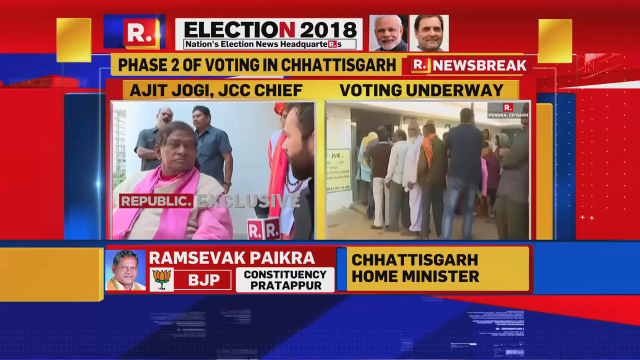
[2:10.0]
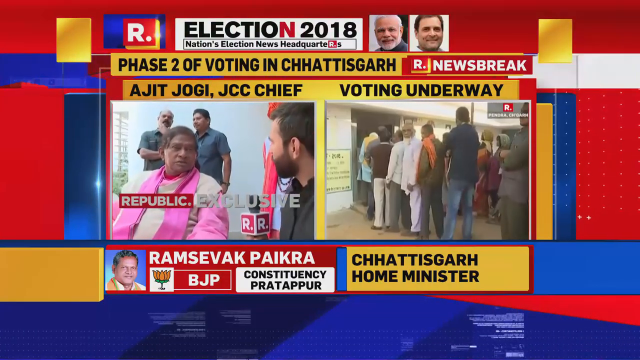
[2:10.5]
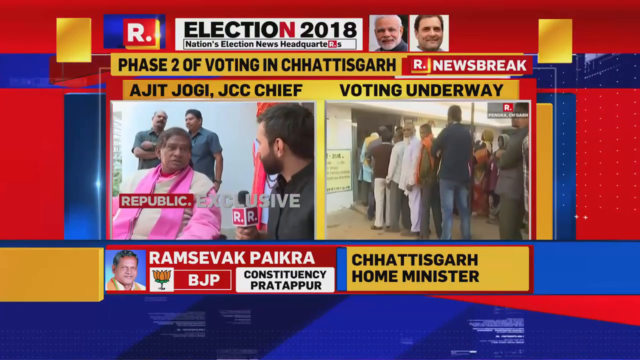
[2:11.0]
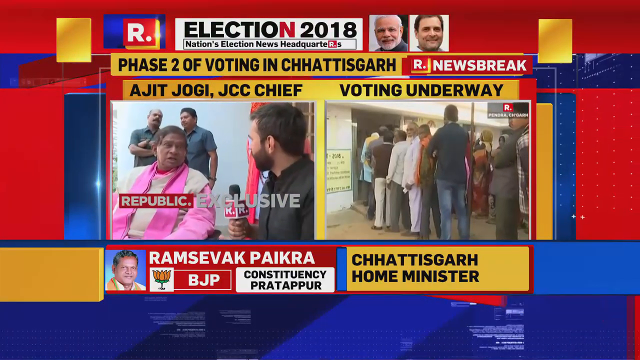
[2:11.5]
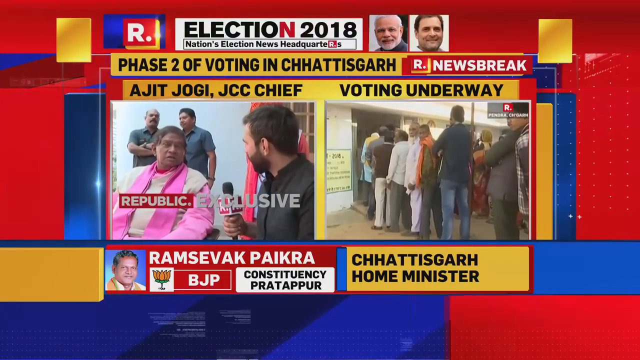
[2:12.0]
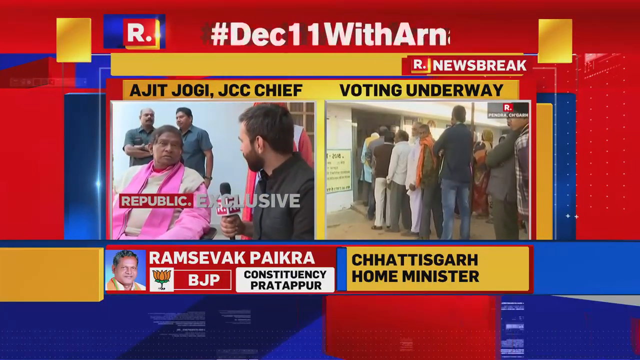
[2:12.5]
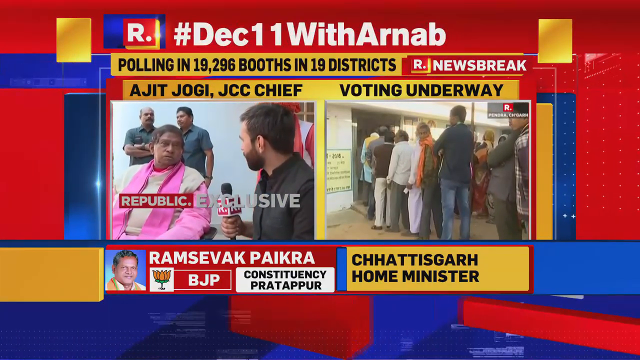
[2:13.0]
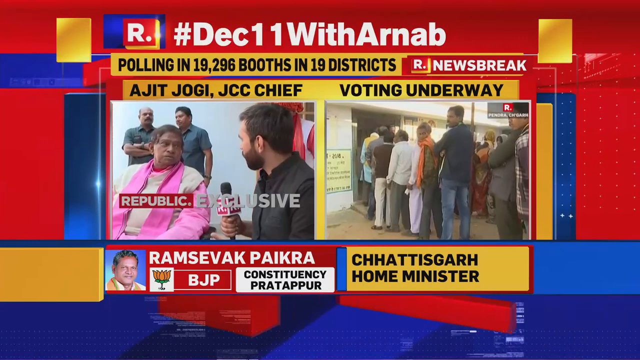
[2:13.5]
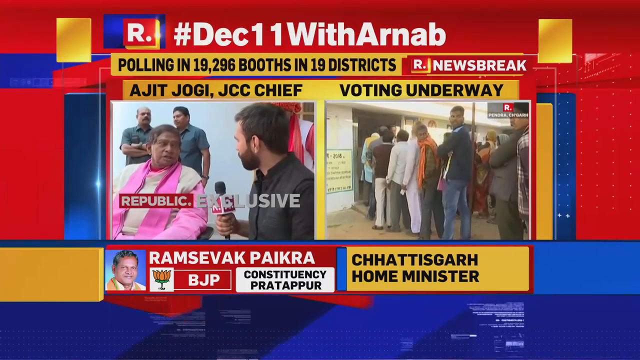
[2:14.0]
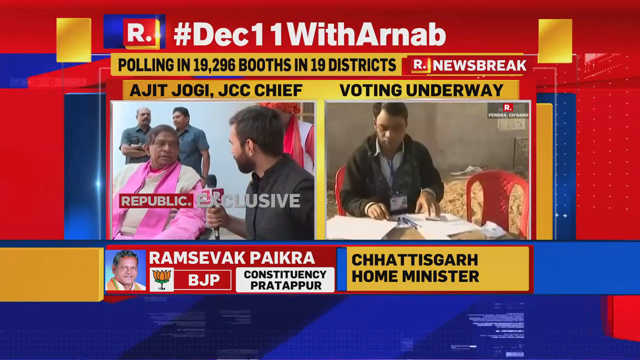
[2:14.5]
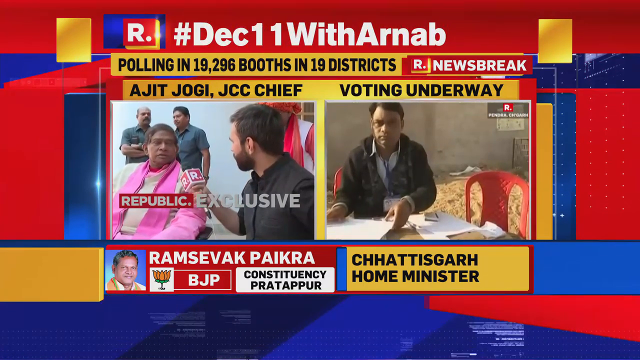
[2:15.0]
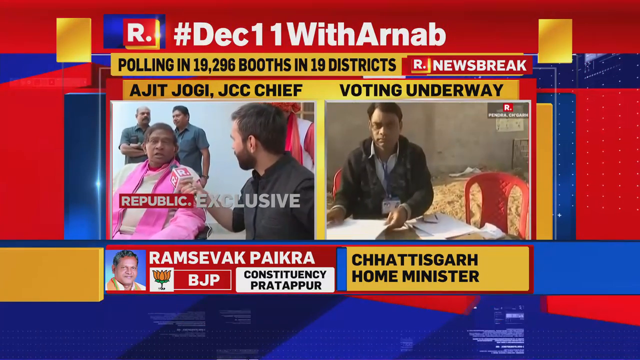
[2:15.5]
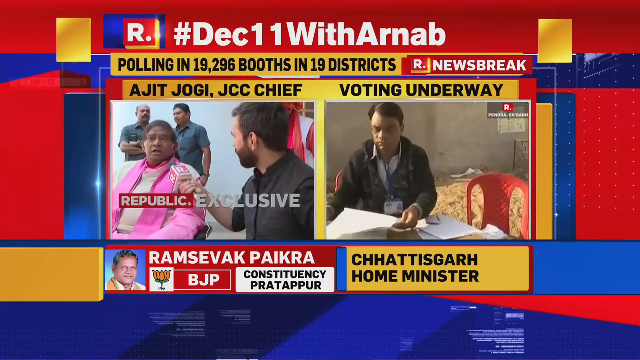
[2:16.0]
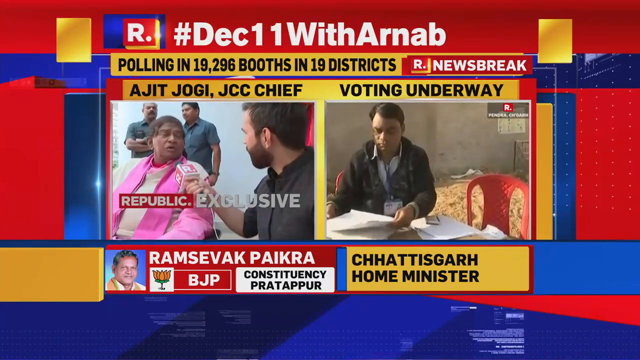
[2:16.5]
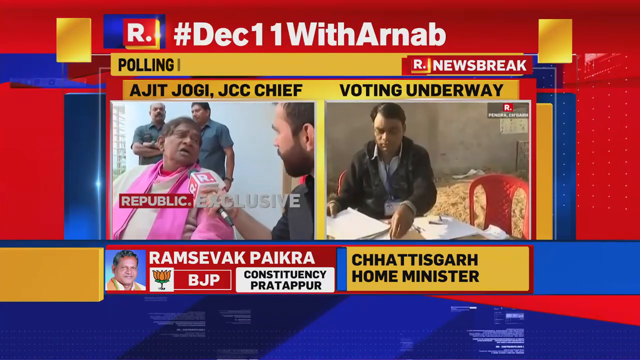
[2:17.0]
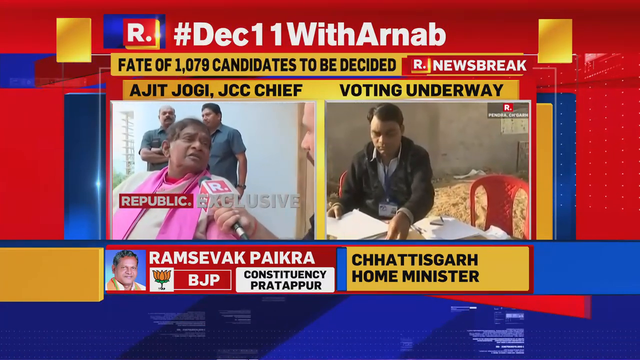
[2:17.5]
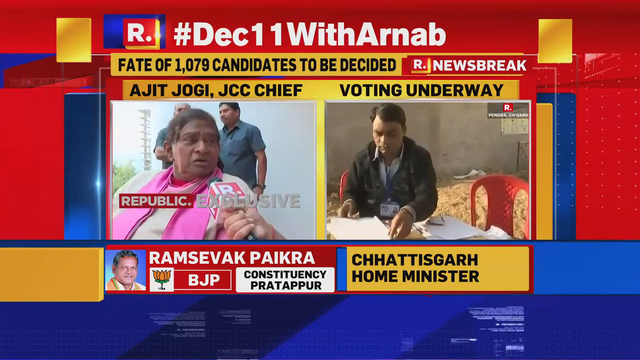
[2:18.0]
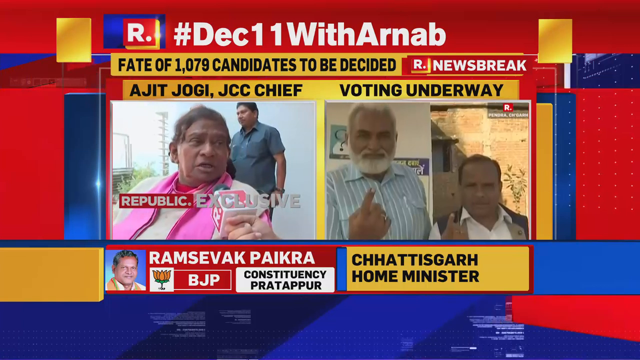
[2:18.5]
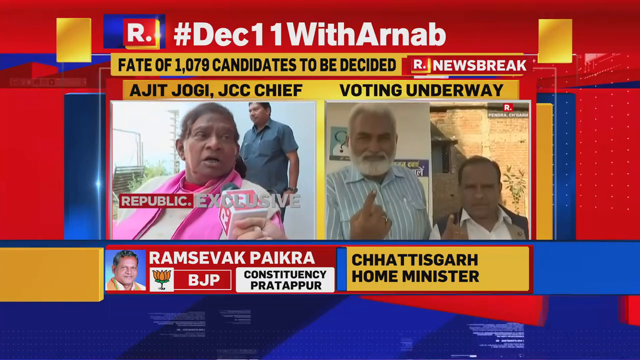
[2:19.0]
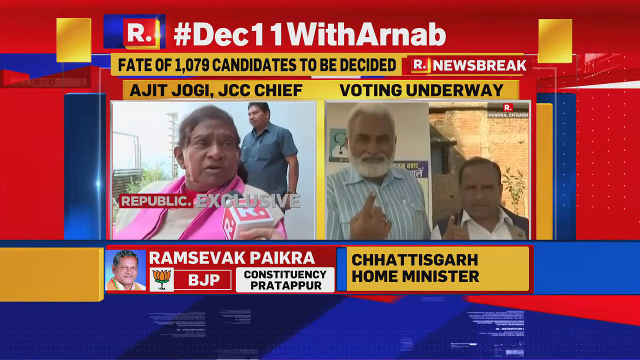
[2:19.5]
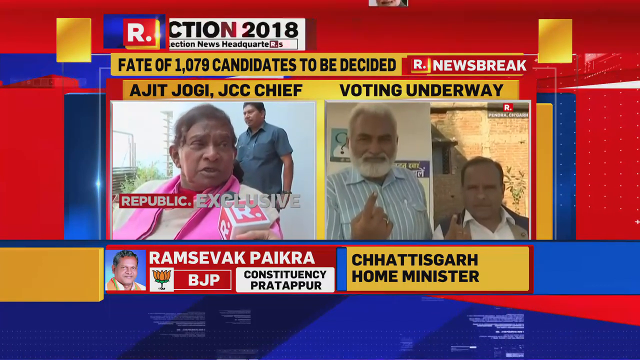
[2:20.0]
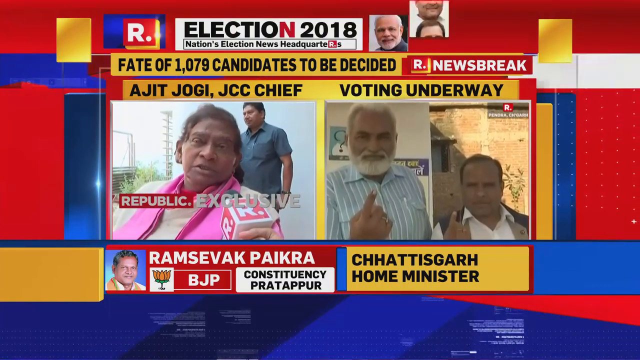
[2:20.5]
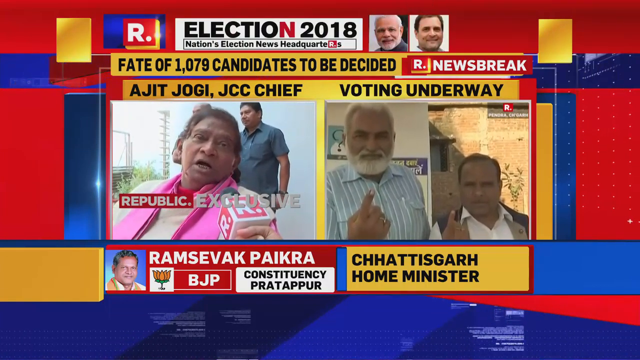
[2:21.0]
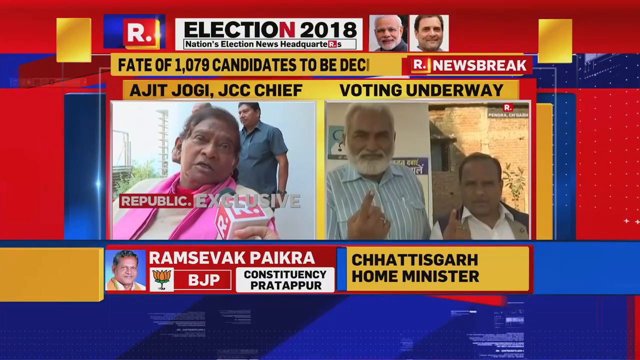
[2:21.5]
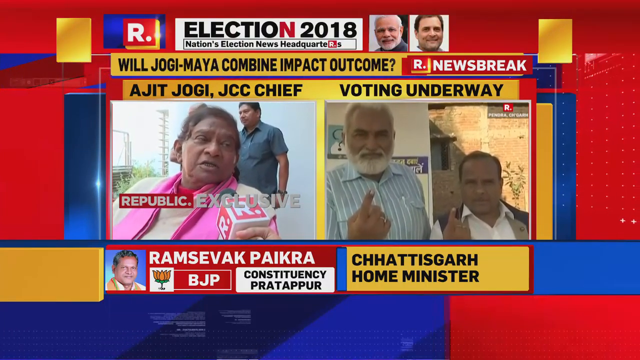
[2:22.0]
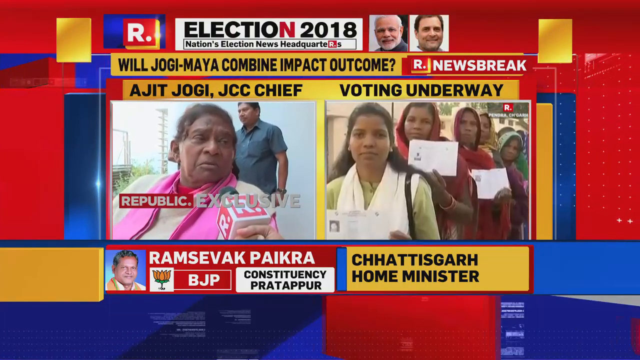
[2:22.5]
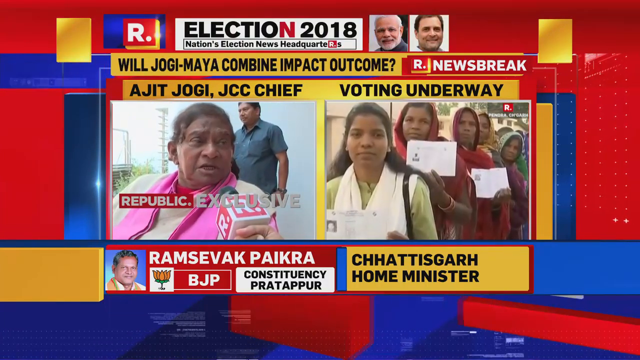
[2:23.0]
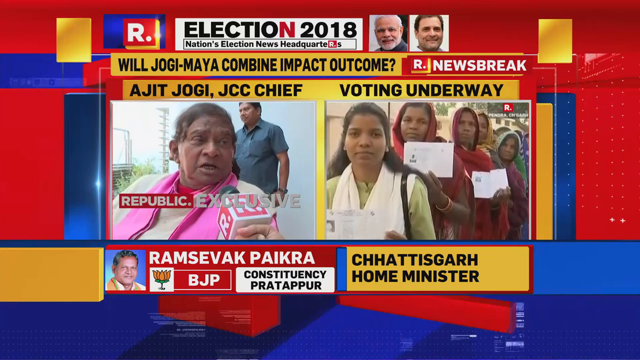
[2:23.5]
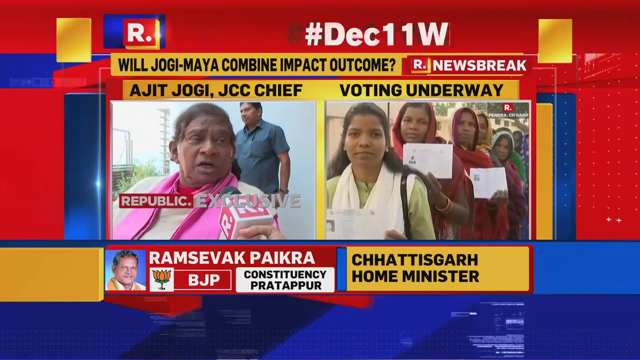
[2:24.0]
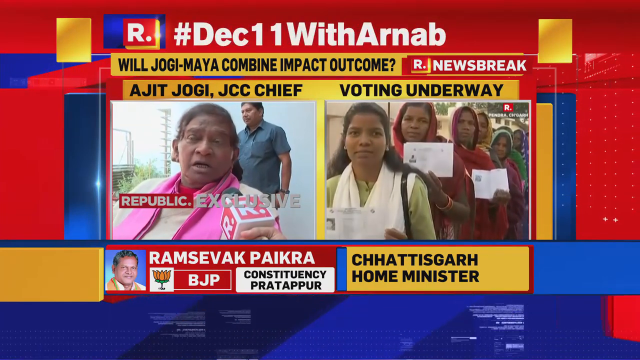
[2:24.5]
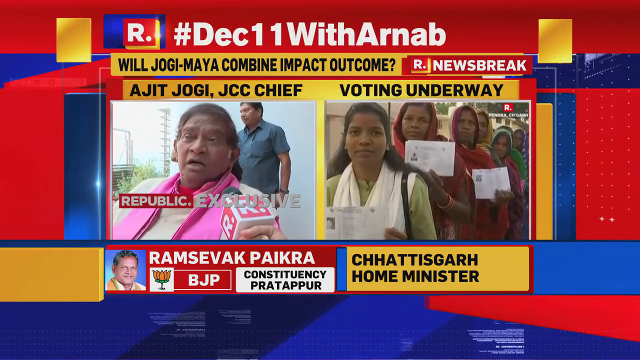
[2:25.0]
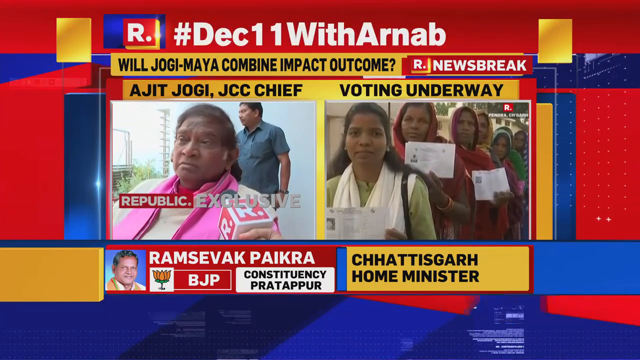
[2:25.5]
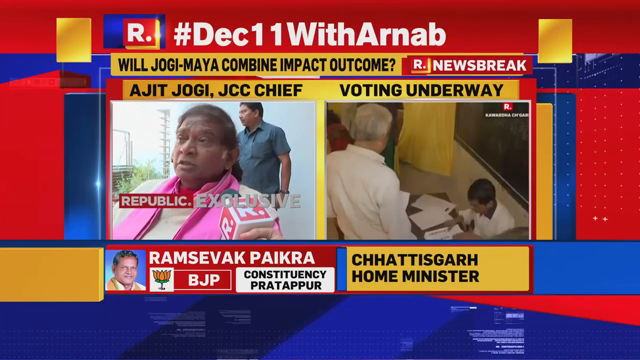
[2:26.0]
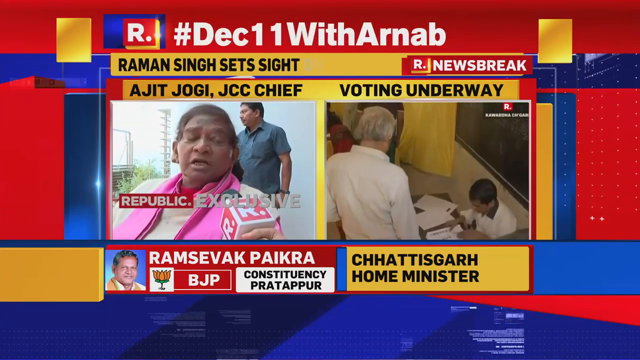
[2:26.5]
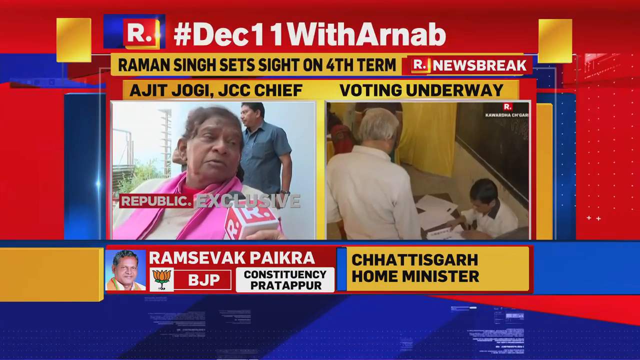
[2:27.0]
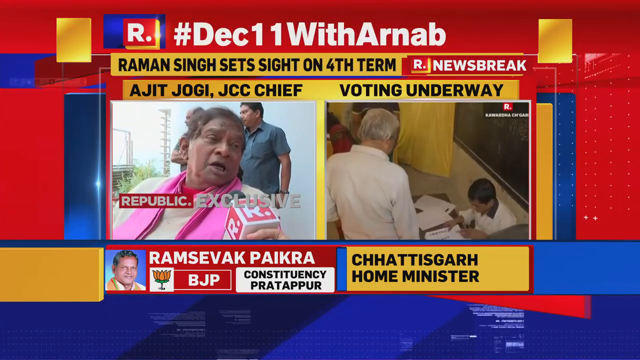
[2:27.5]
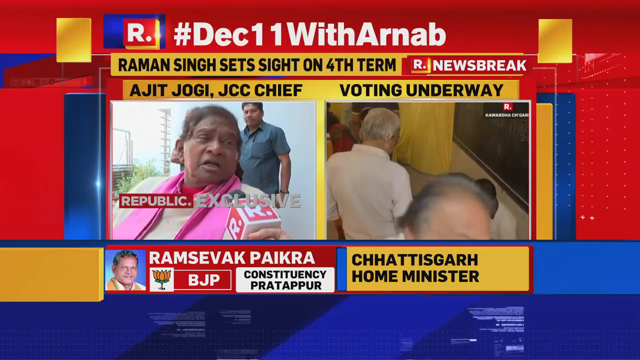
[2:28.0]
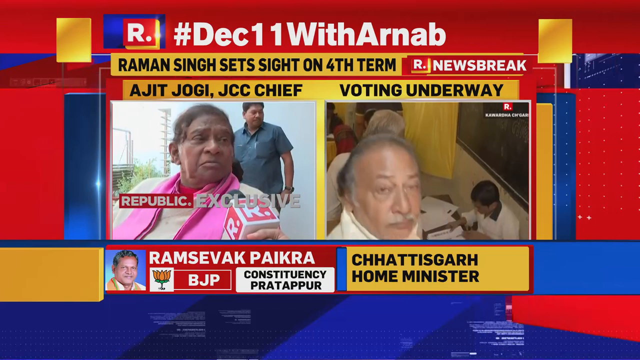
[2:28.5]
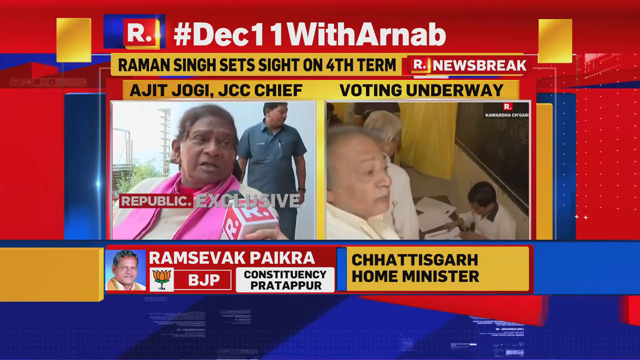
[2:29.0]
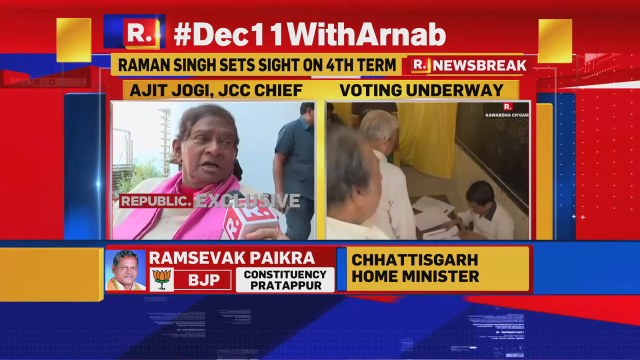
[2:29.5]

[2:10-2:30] The video on the right side of the graphic goes from people on the street to people waiting in line, then to a man in a black jacket rifling through some papers on a desk. Next, two people are shown side by side, both doing the same thing with their hand, kind of holding their index finger up in the air. These are all people from India. Then a group of women in India, many in head scarves, hold up a piece of paper, maybe showing that they voted. Then a polling station appears, where people check in with a man sitting at a desk. The graphic at the bottom stays the same, and on the left is still the woman in pink. At the top, the graphic keeps switching back and forth between the election 2018 graphic and the December 11th graphic. Underneath, the yellow text box loops through the headlines about the booths and the districts, and below it is the constant yellow text "Ajit Jogi, JCC chief", with "voting underway" on the right of that same text box; that last text box stays the same the whole time.